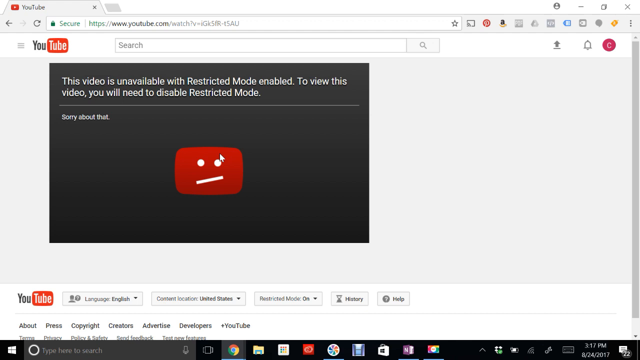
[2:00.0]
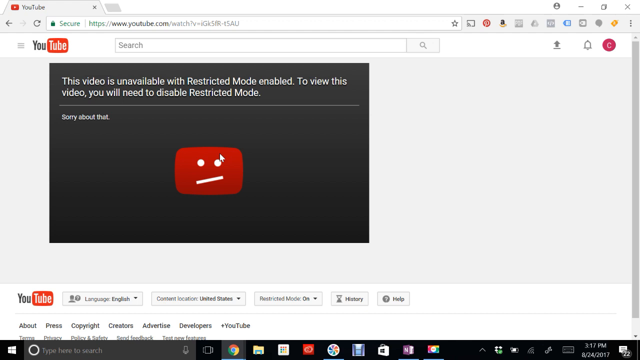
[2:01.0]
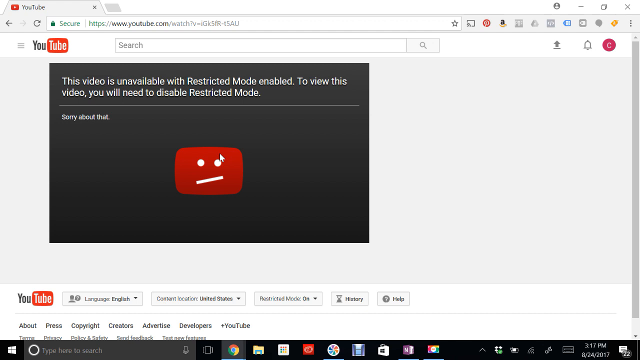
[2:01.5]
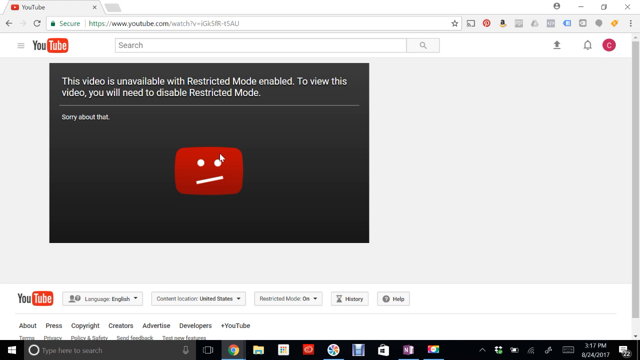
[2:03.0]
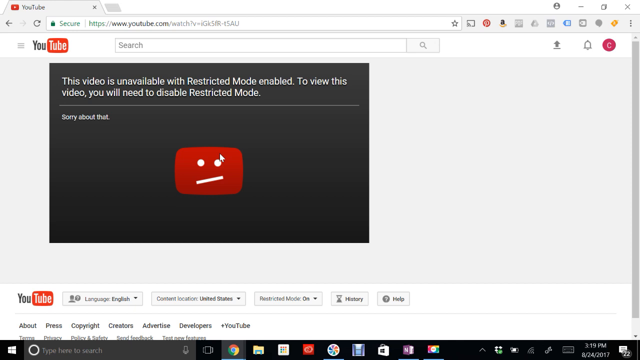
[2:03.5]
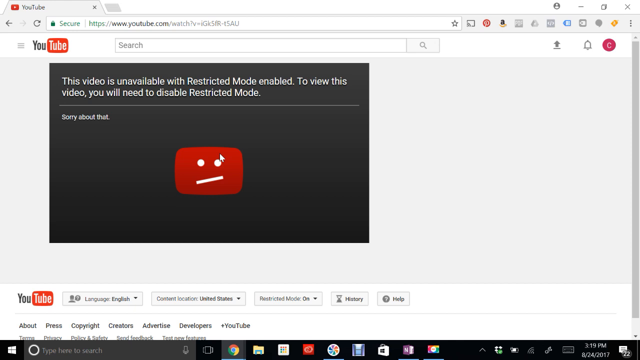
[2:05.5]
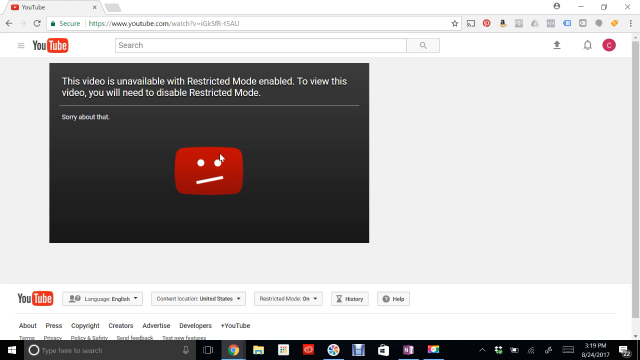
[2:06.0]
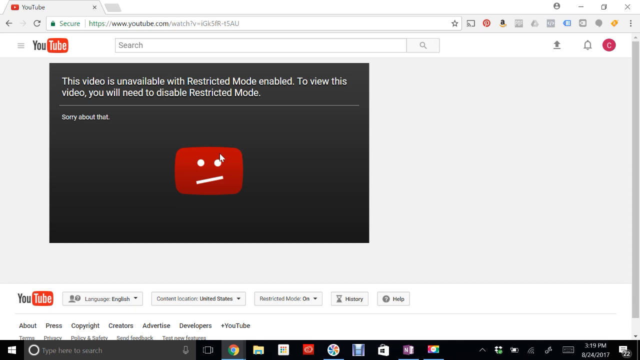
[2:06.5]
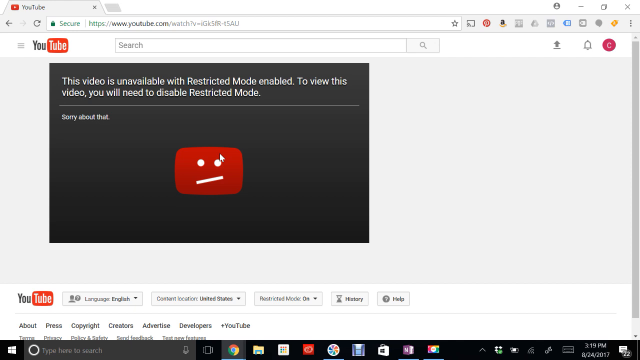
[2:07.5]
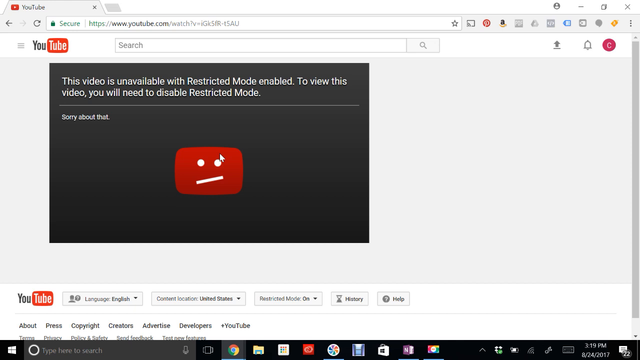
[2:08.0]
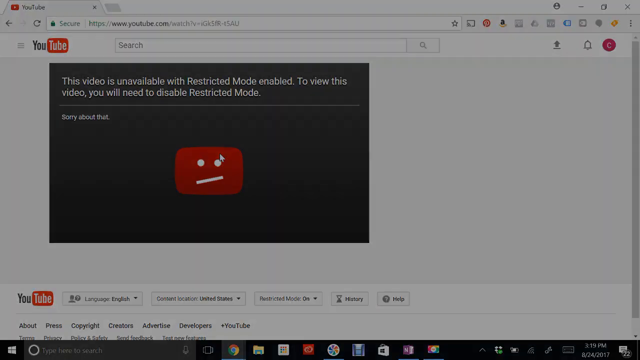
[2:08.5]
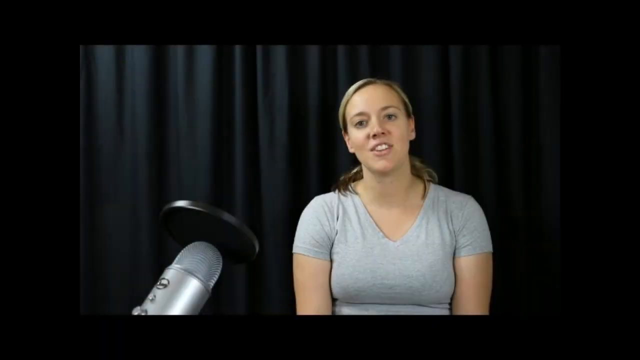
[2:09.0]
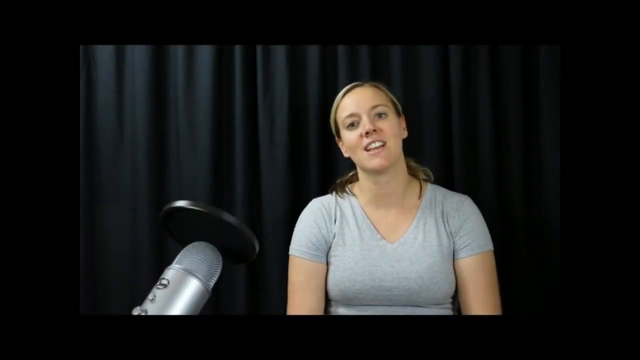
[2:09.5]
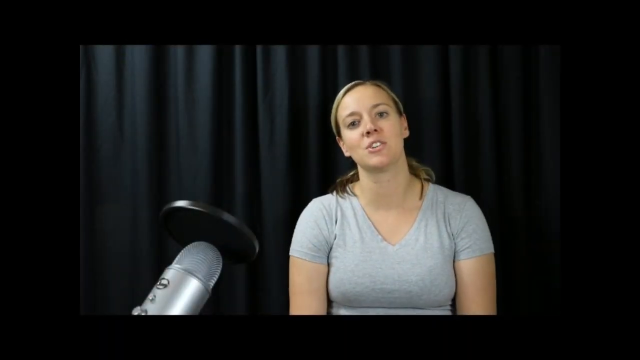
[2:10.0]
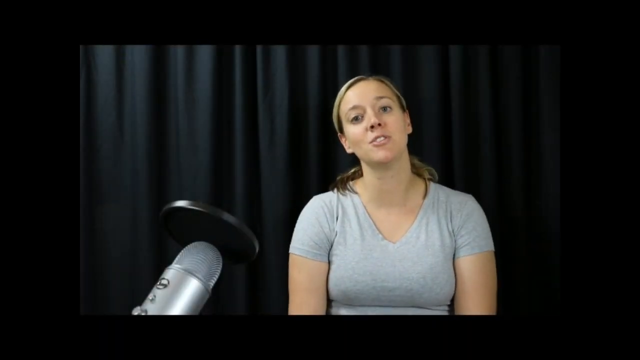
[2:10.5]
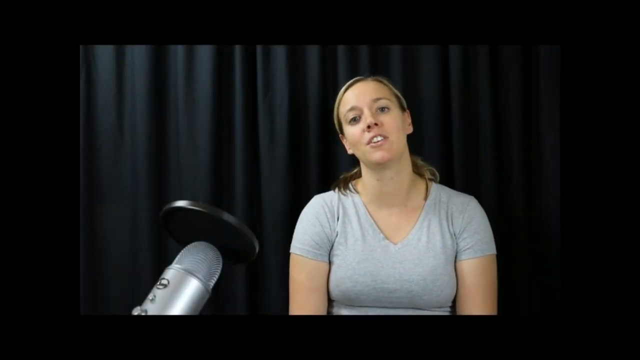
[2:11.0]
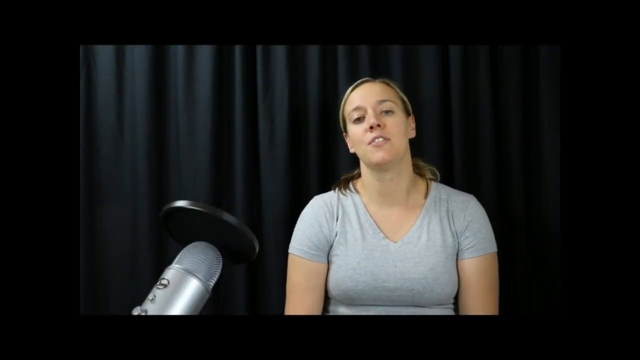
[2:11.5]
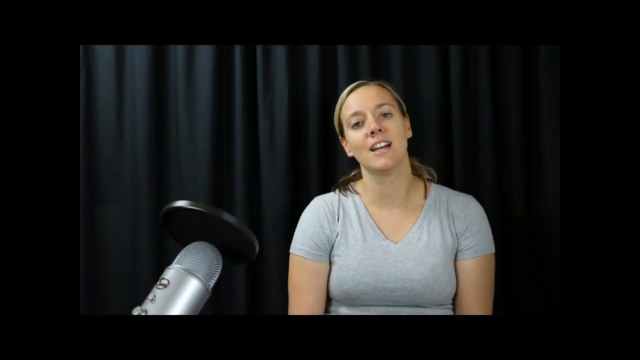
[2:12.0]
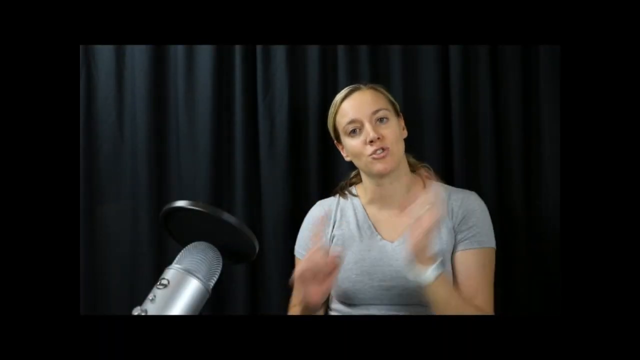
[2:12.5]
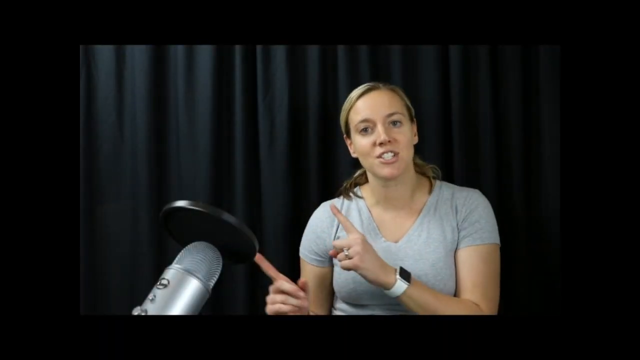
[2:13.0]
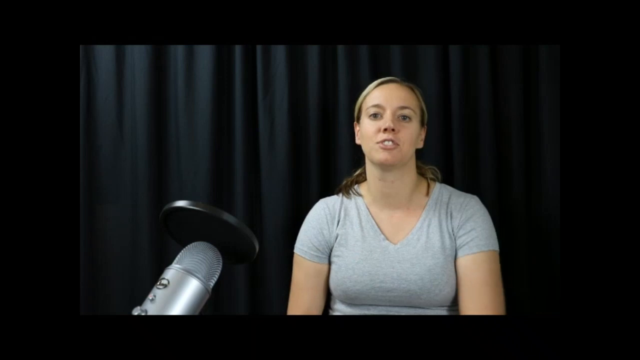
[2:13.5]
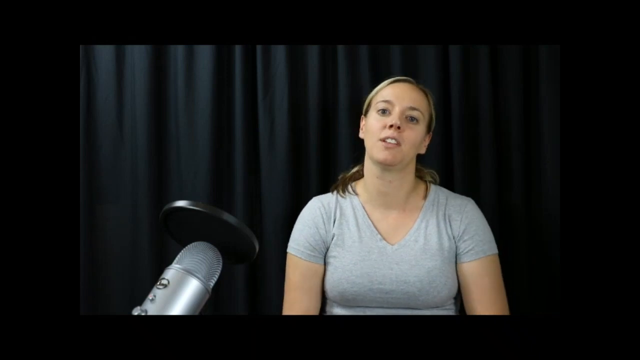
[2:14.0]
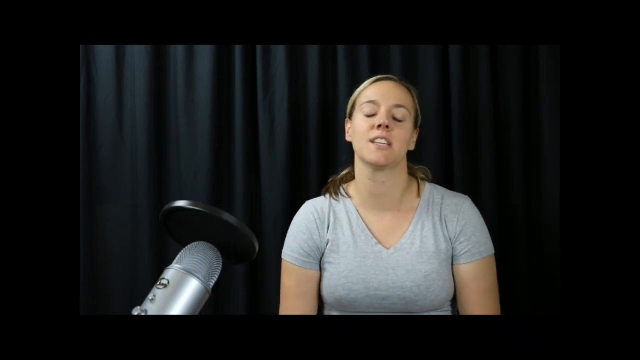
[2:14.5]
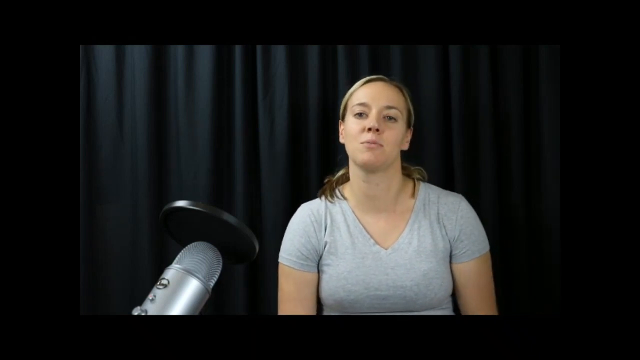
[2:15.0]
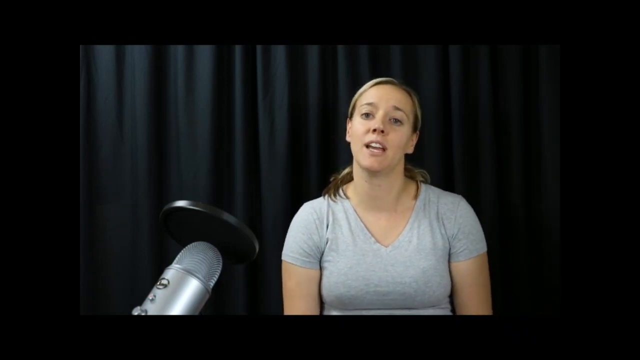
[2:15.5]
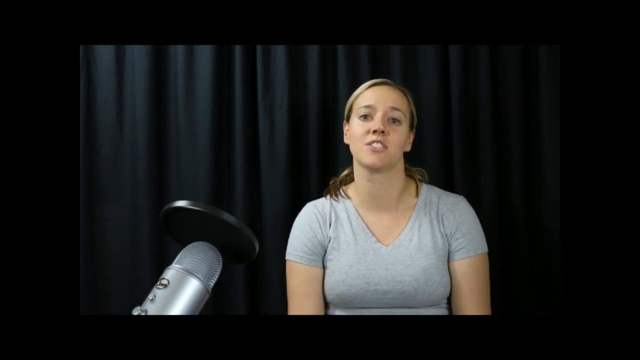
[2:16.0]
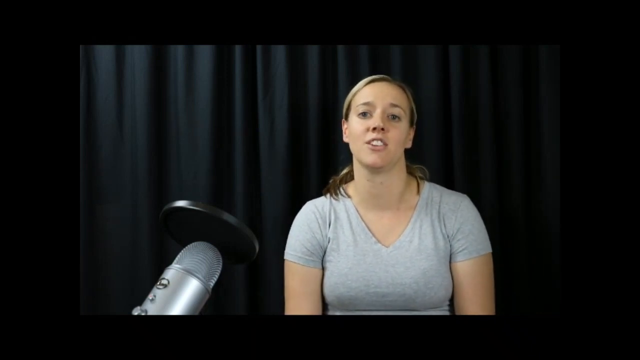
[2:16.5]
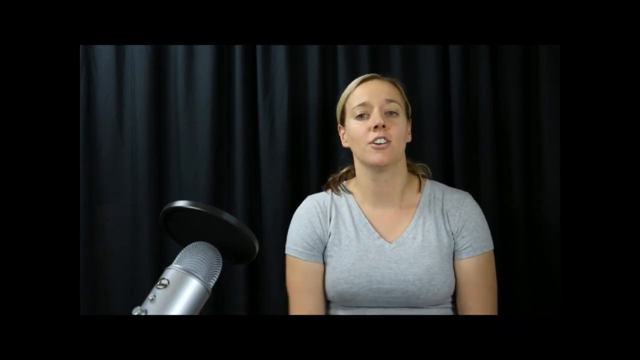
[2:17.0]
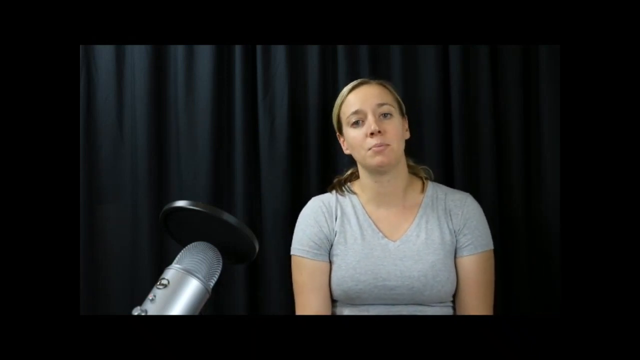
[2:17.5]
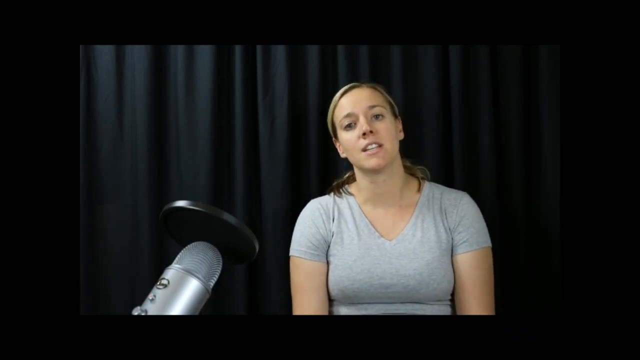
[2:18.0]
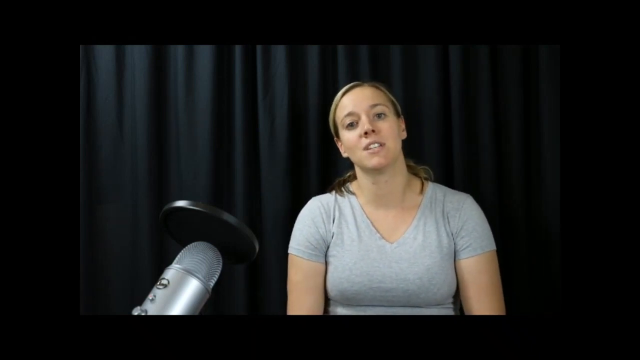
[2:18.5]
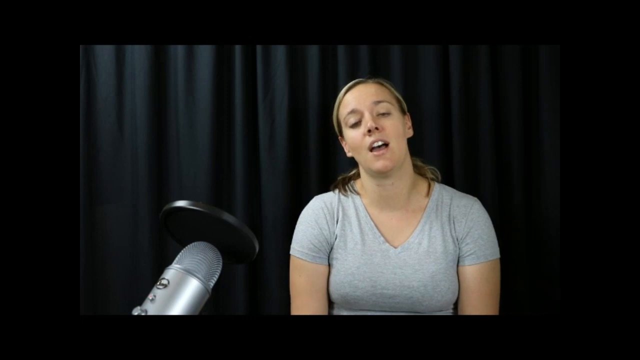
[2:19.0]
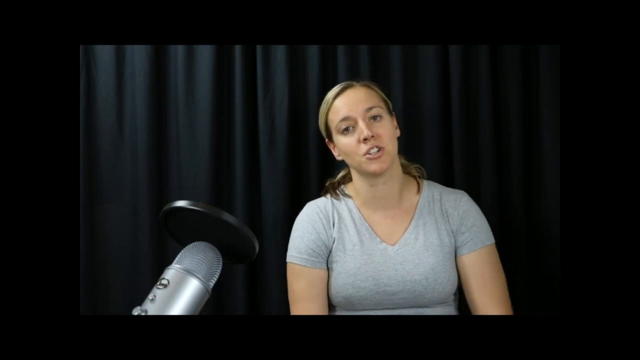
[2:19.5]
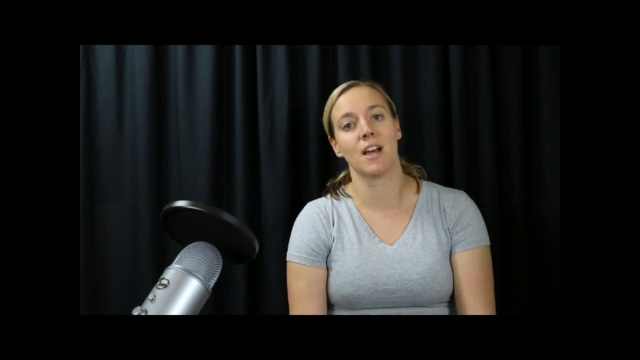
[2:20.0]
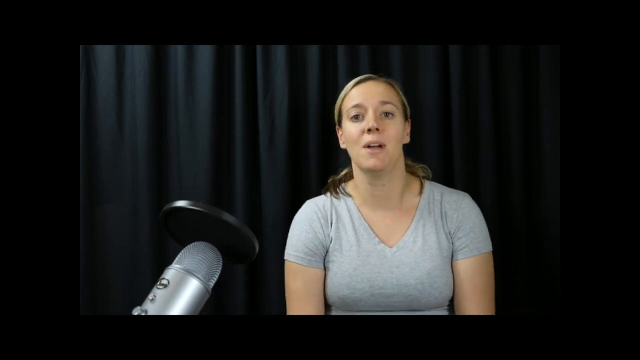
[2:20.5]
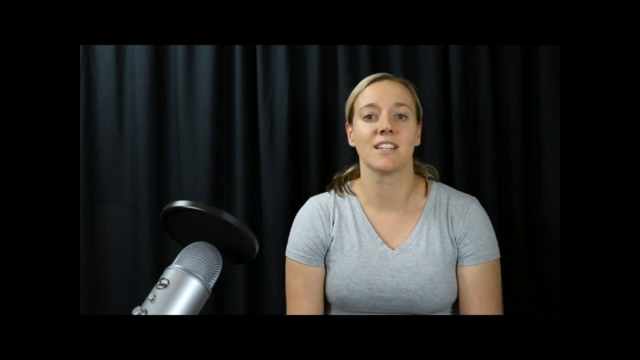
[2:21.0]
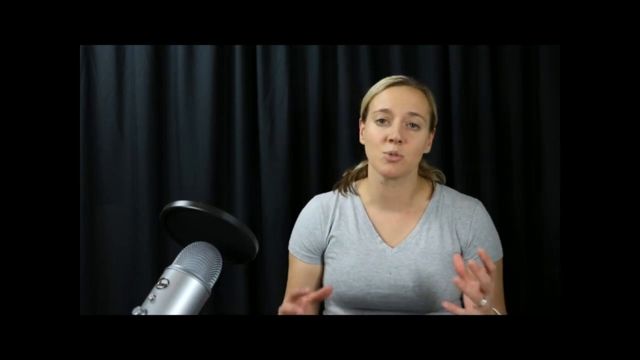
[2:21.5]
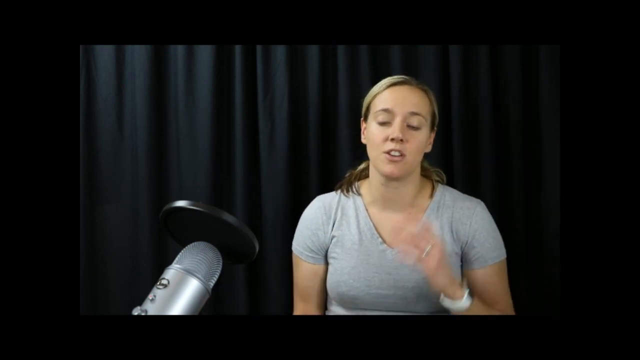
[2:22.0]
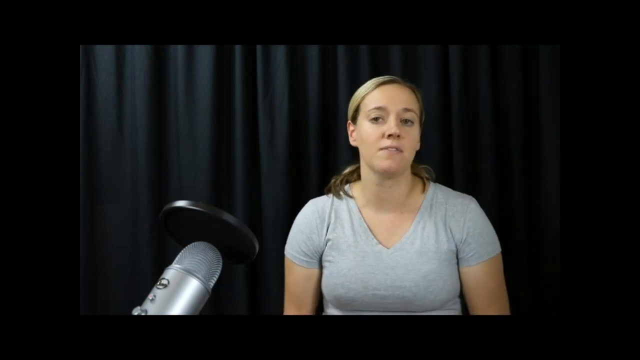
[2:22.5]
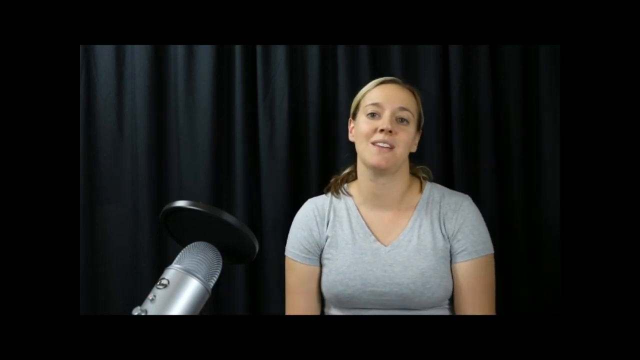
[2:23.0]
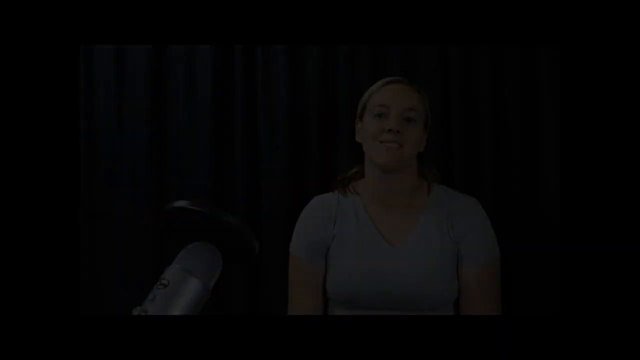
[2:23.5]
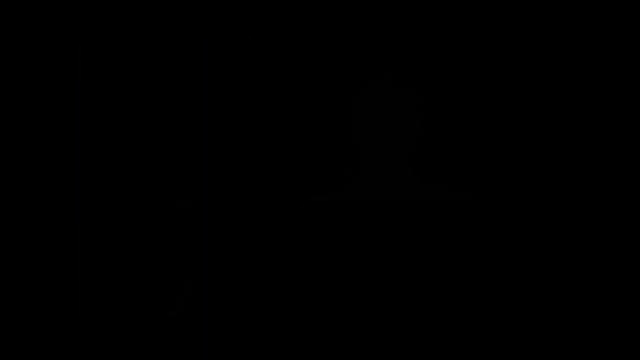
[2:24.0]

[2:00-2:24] The YouTube screen reads "this video is unavailable with restricted mode enabled. To view this video, you will need to disable restricted mode. Sorry about that." The screen stays up for quite a while. The video then cuts to a broadcaster or video podcaster sitting in her studio in front of a professional microphone. She wears a grey short-sleeved top and talks with some animation and hand gestures.